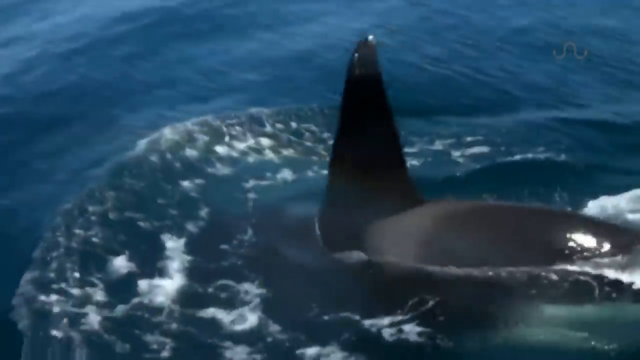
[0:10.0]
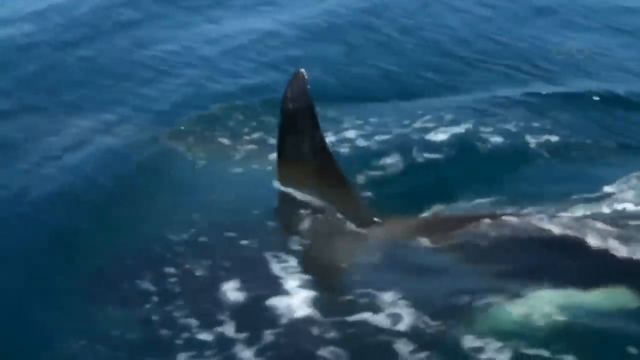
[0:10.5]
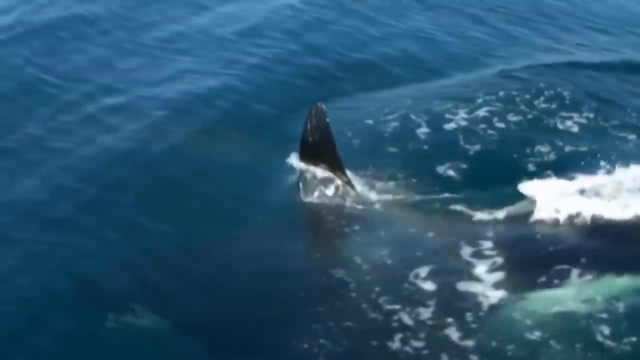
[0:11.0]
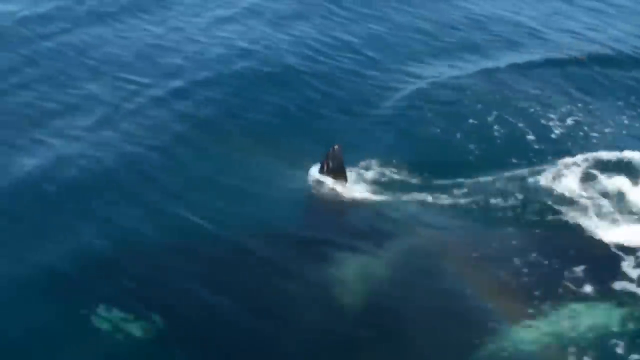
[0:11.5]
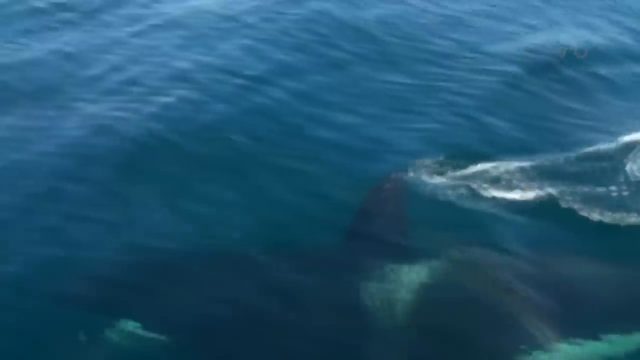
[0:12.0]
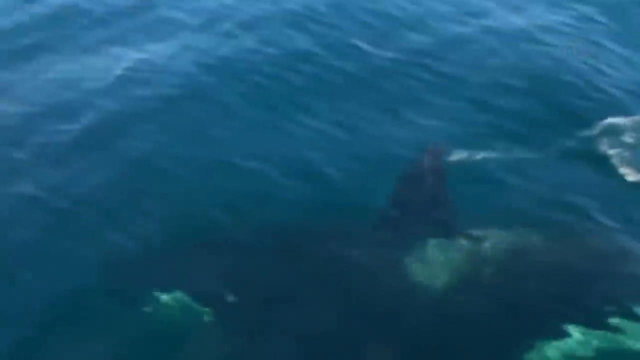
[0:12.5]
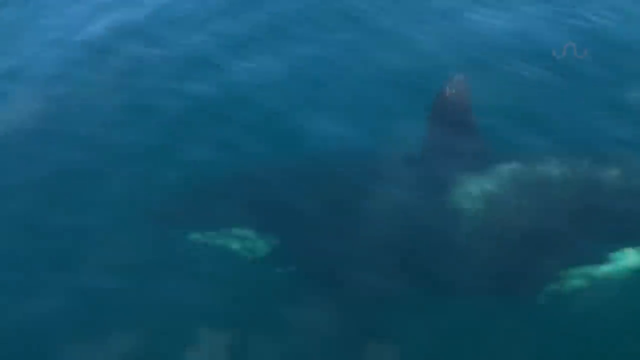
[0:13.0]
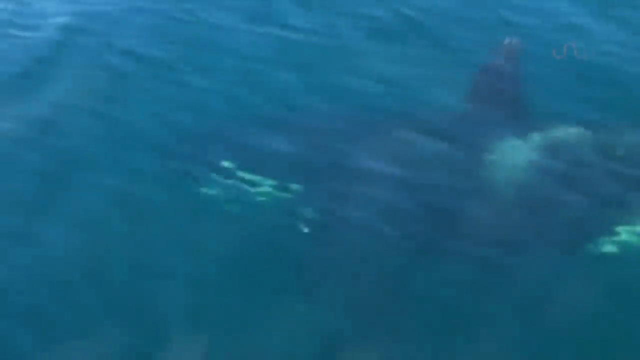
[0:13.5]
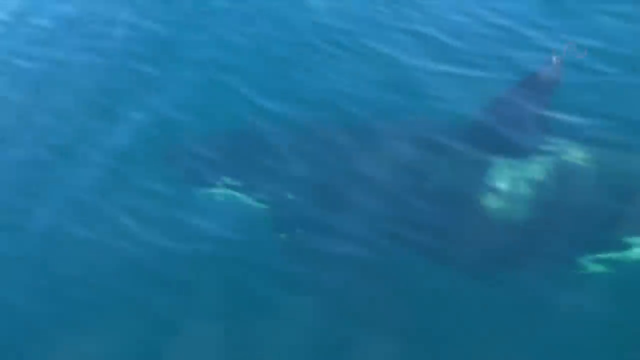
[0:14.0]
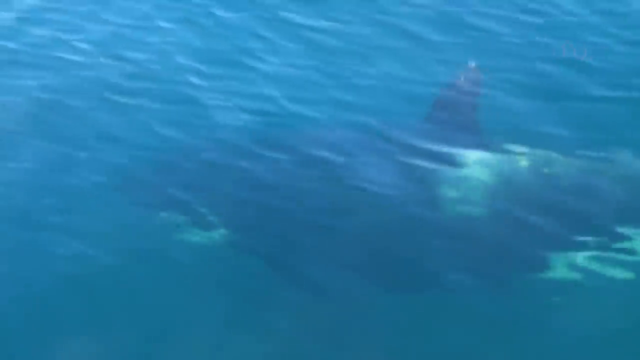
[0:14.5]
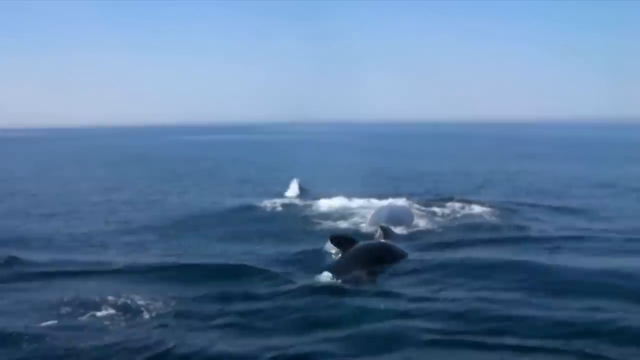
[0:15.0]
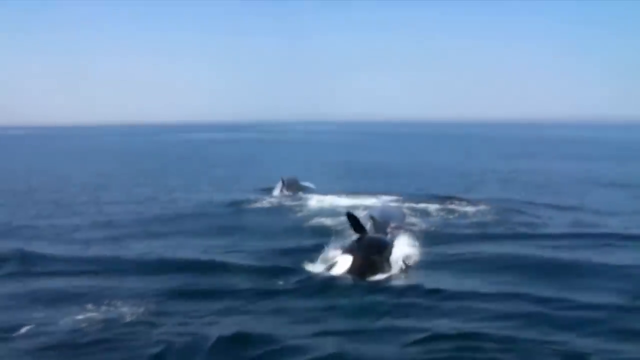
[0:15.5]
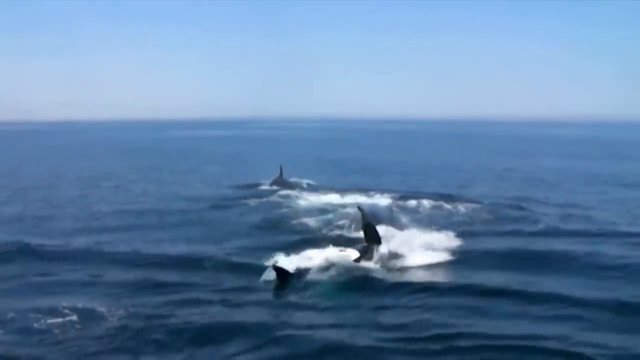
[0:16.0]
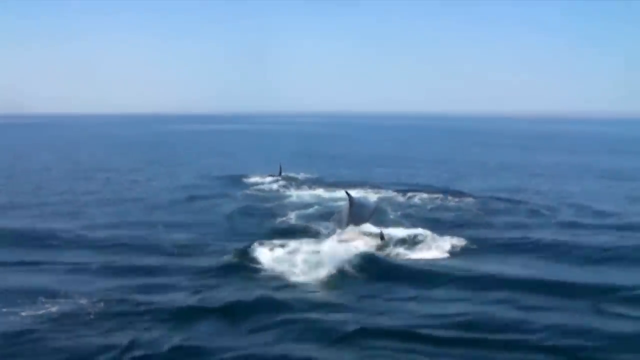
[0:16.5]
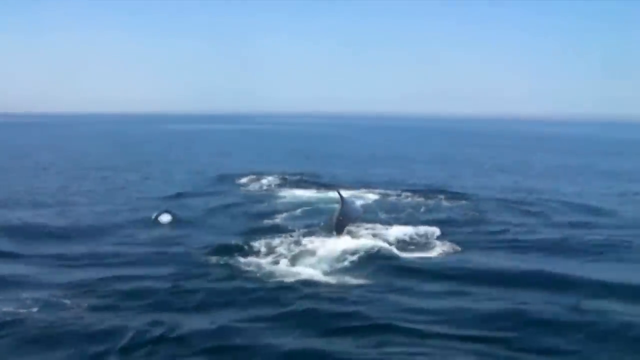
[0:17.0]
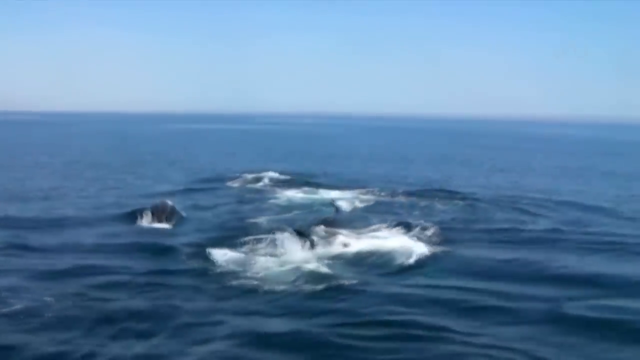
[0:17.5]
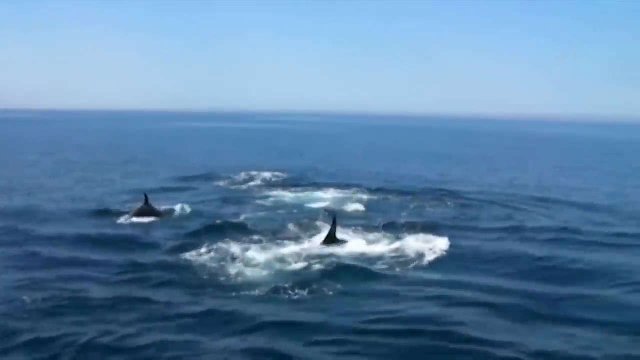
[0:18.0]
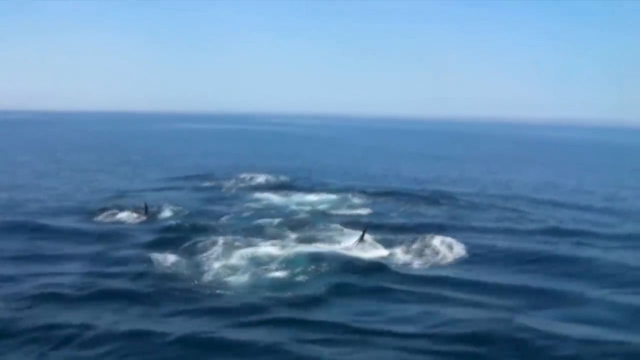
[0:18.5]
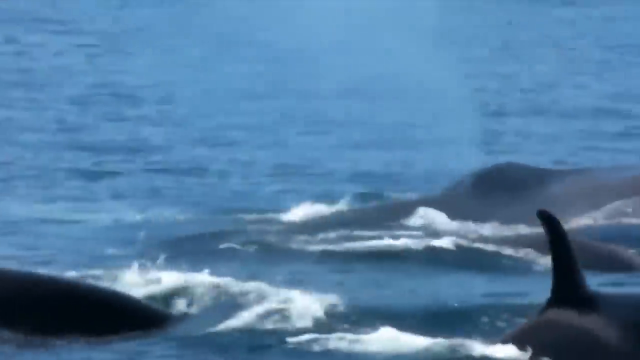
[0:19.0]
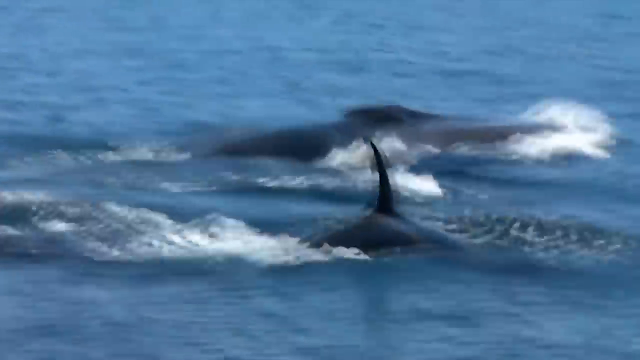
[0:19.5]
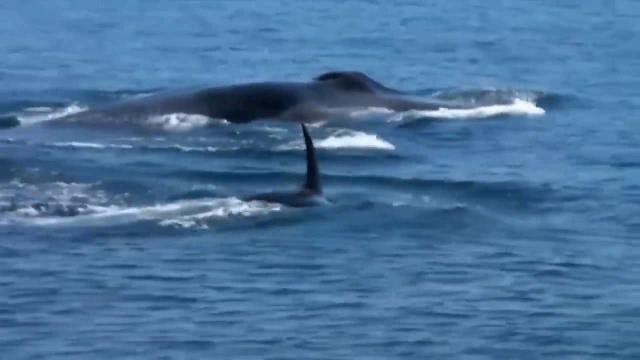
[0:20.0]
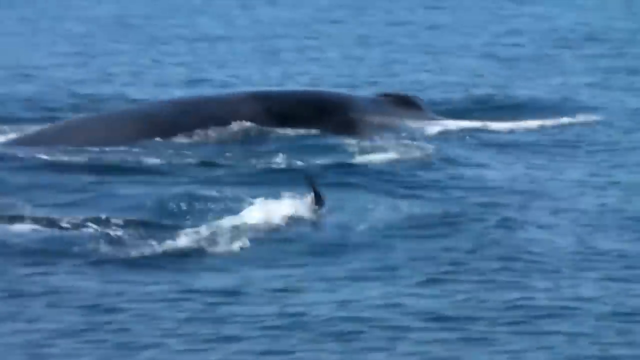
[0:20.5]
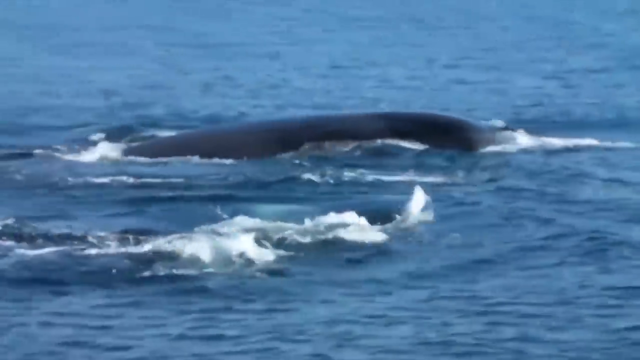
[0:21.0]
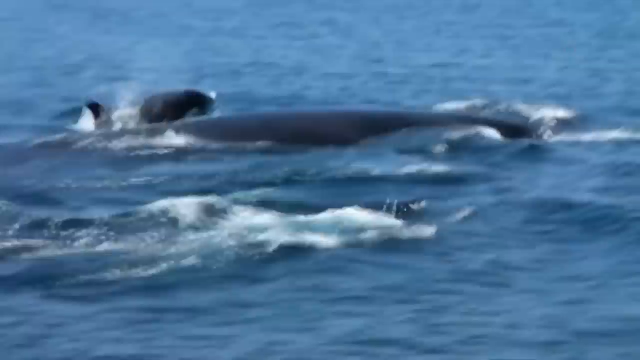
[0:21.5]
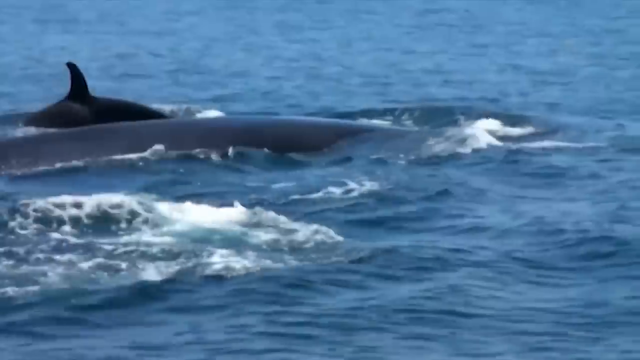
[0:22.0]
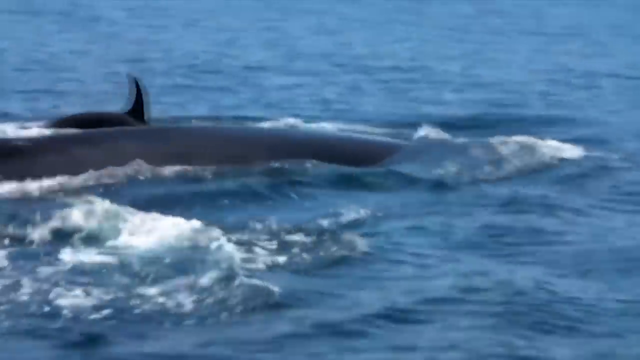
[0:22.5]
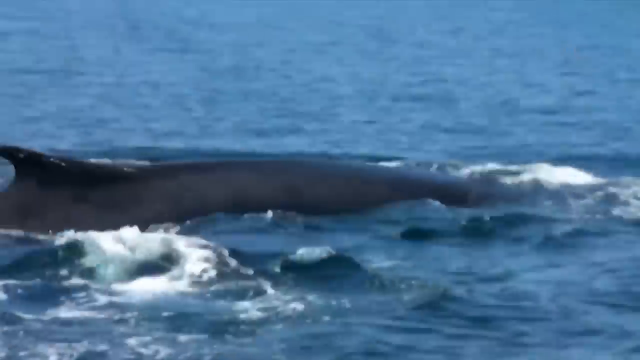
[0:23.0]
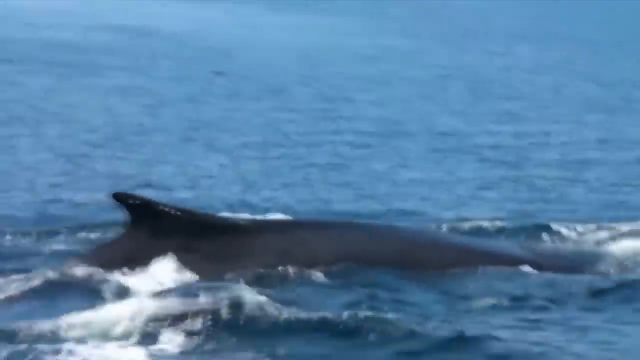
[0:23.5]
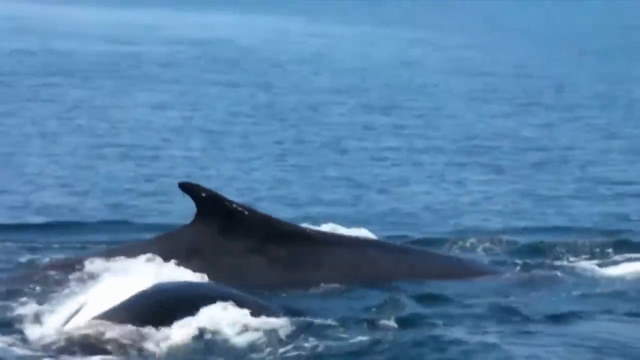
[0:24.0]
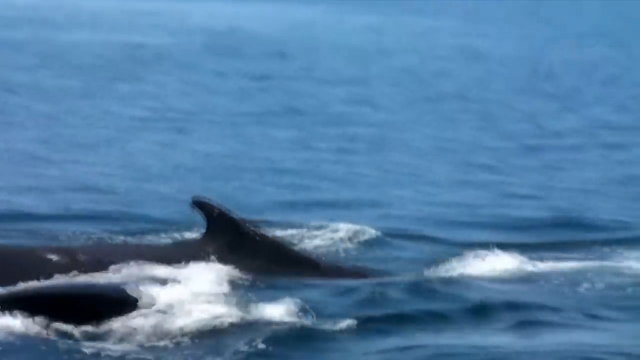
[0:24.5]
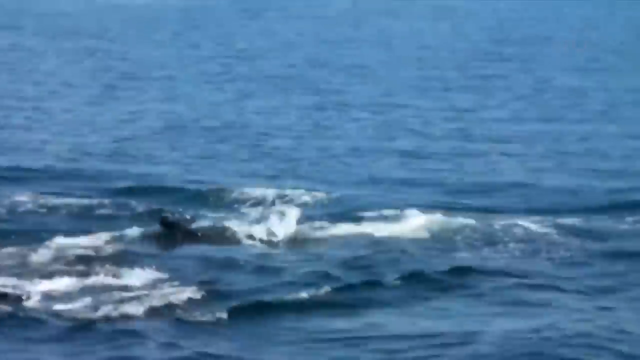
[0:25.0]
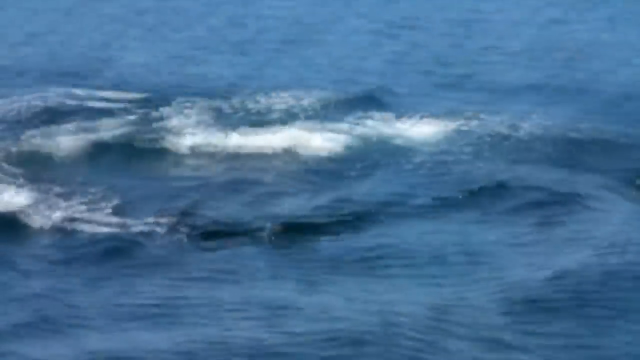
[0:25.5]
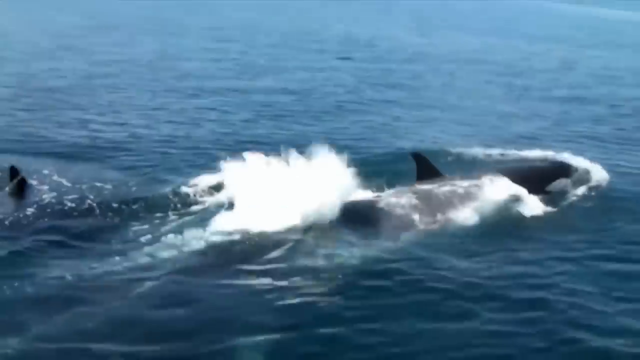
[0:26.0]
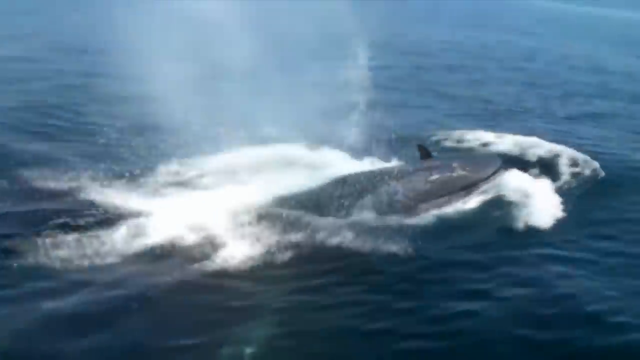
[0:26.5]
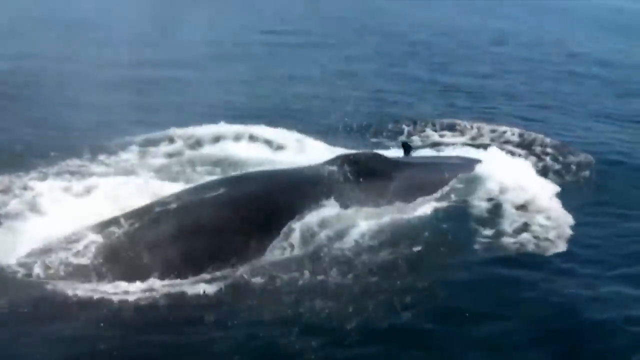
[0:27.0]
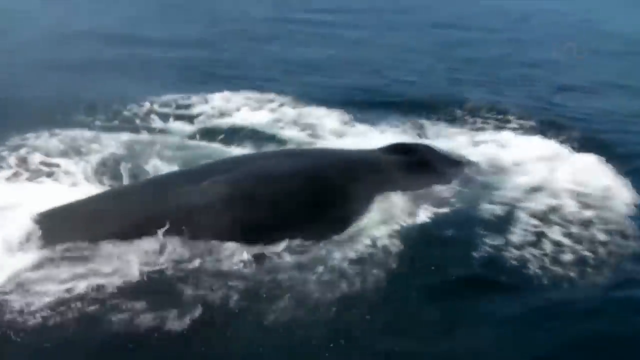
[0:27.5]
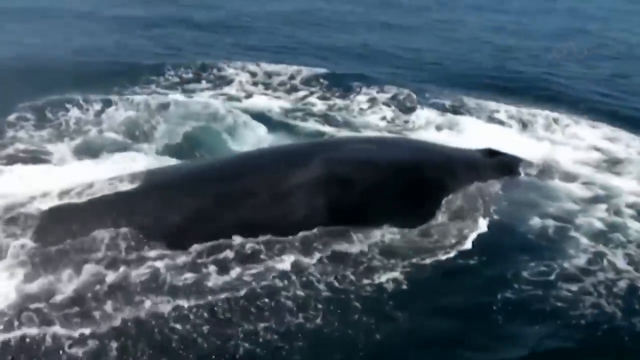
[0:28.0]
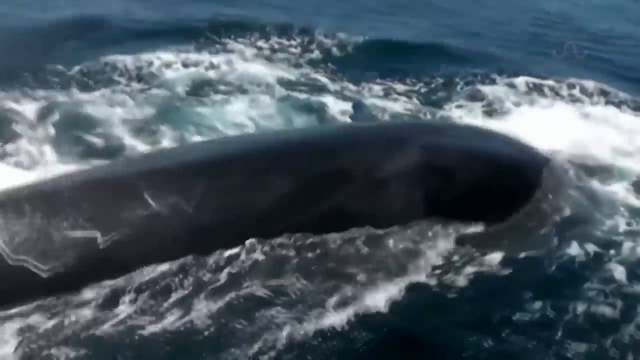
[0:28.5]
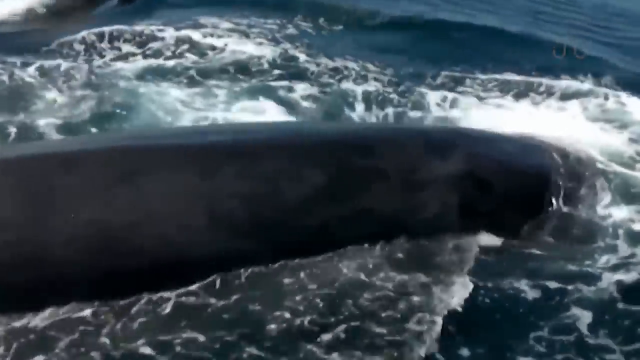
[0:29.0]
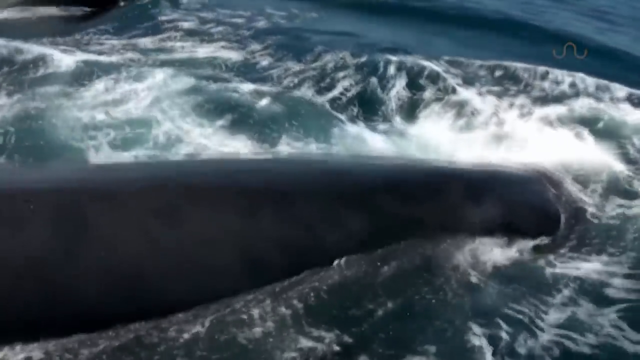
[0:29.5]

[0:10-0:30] A close-up view shows an orca swimming alongside a boat. Its full dorsal fin starts out of the water and then slowly disappears beneath the surface. The whale keeps swimming alongside the boat beneath the surface, and the top of the whale is visible through the water. The video cuts to a pod of orcas swimming together, exposing their fins out of the water at different points and disappearing back beneath the surface. Another cut shows three orcas swimming side by side. The one closest to the camera breaches the surface, exposing its back before disappearing again. The middle one, which appears to be the largest, swims mostly exposed from the surface, while the third, furthest away, slowly exposes its dorsal fin and dips back beneath the surface. Water splashes around them as they continue swimming alongside the boat. The video then cuts to the largest orca appearing above the surface; as it breaches, it blows water out of its blowhole.